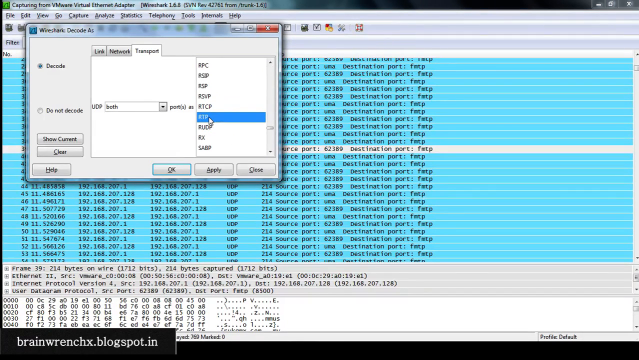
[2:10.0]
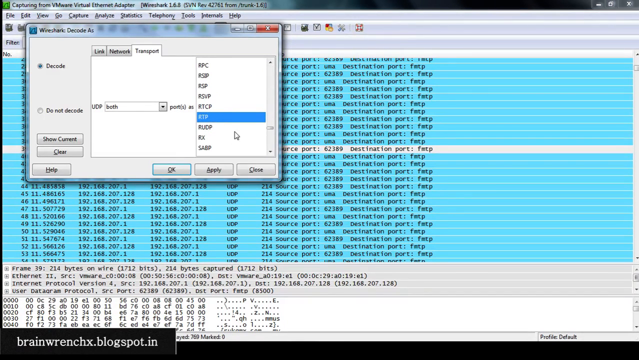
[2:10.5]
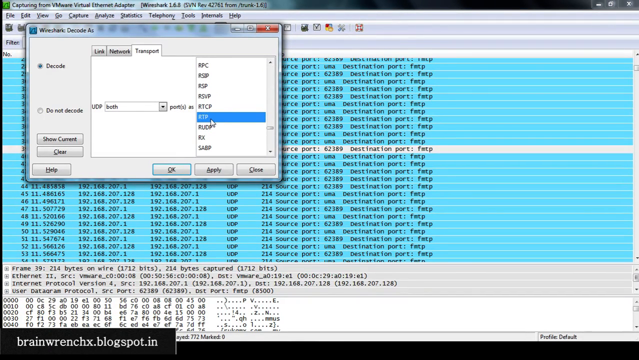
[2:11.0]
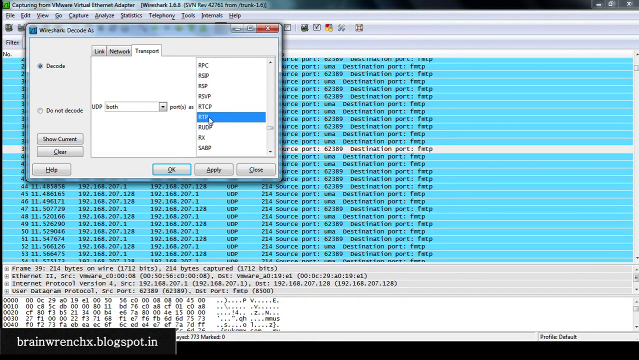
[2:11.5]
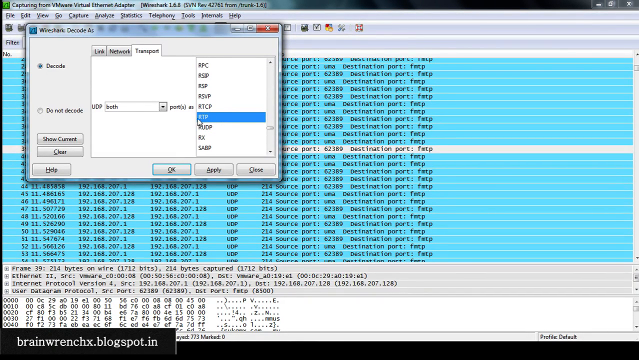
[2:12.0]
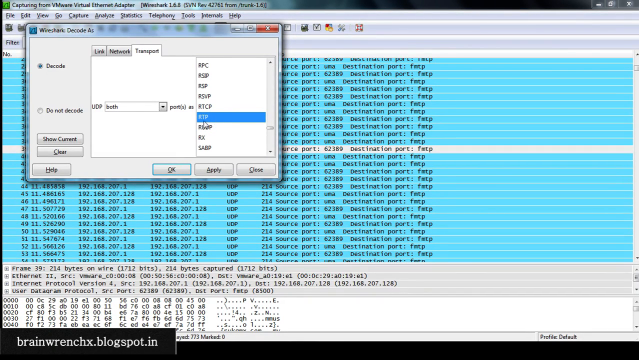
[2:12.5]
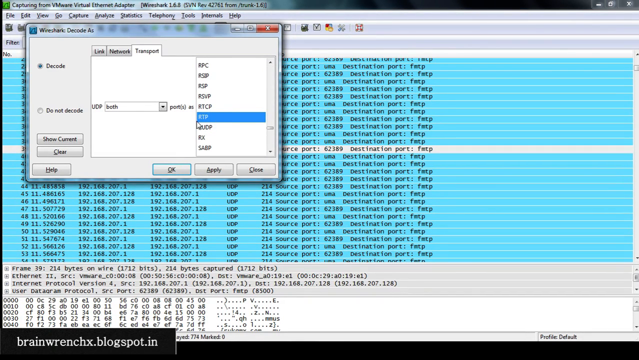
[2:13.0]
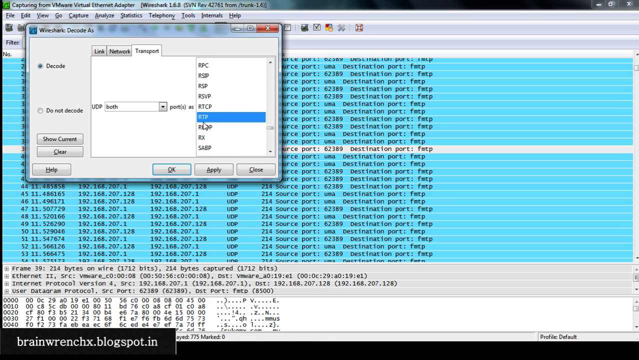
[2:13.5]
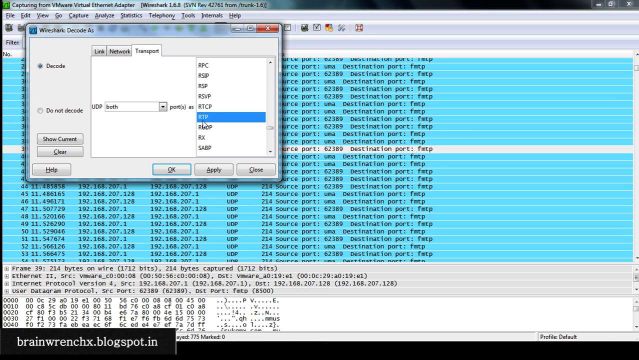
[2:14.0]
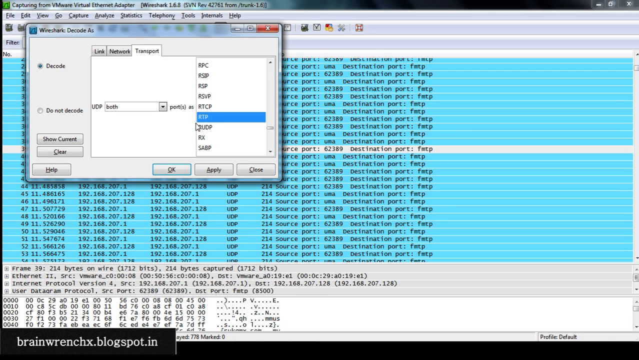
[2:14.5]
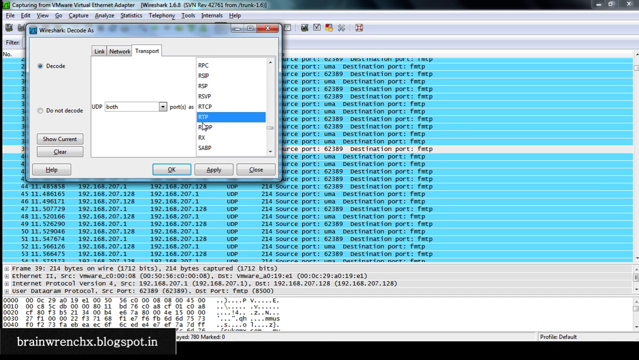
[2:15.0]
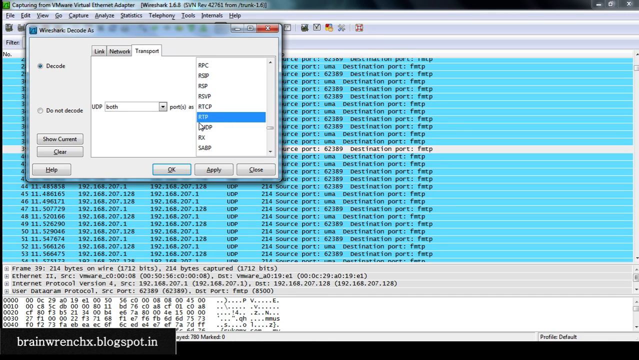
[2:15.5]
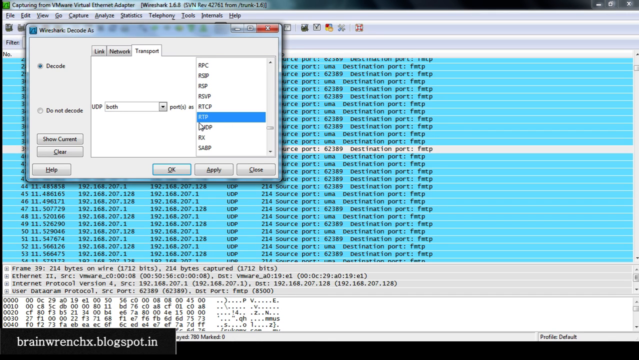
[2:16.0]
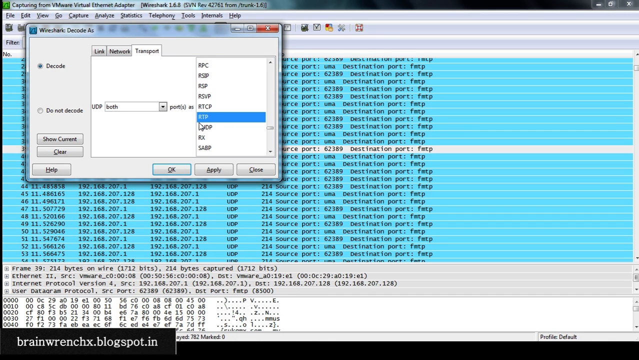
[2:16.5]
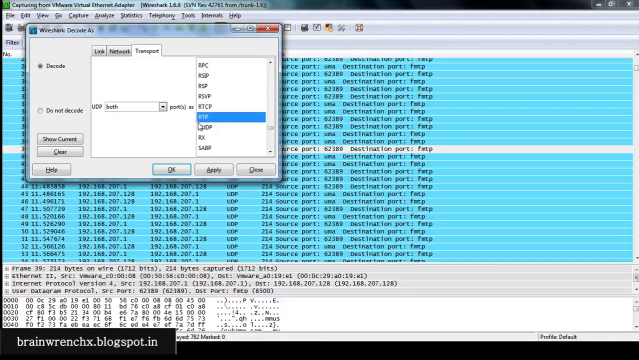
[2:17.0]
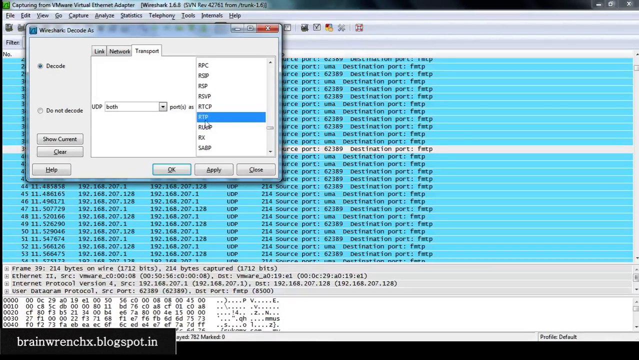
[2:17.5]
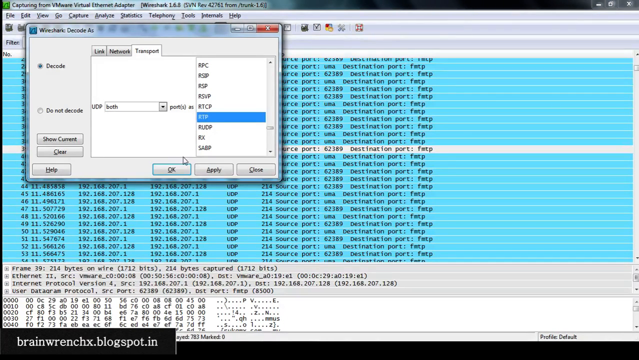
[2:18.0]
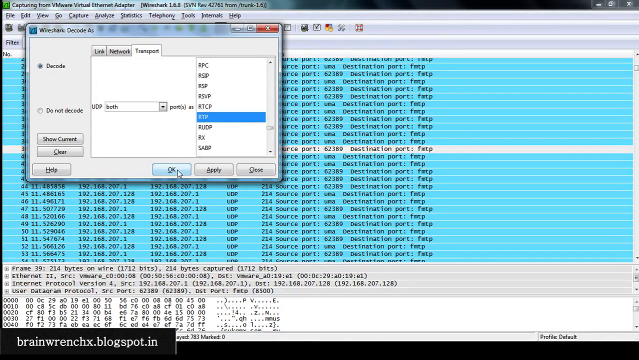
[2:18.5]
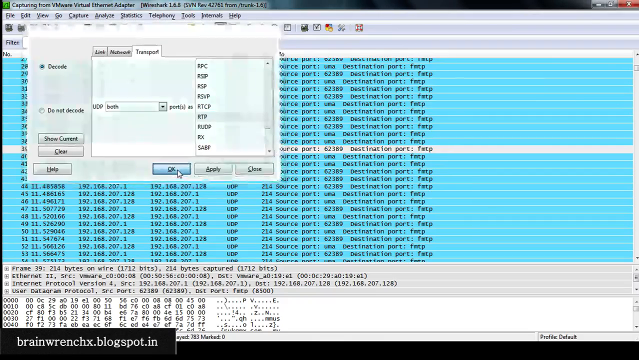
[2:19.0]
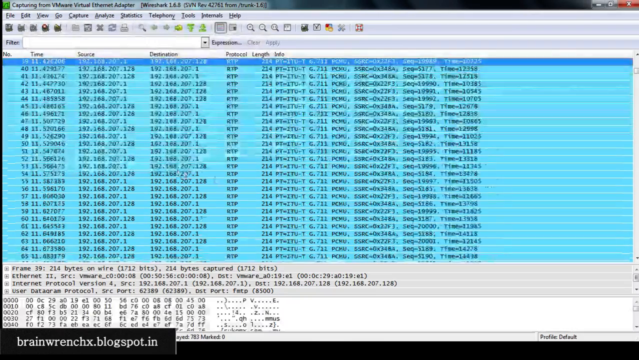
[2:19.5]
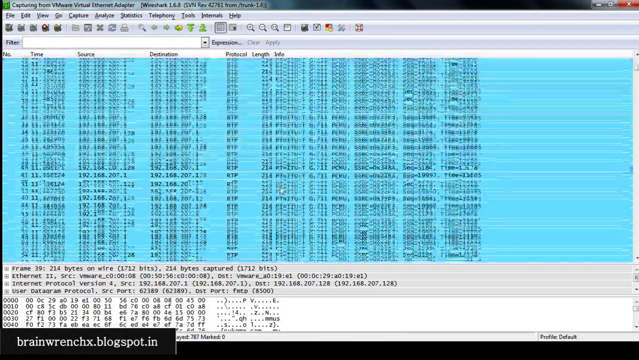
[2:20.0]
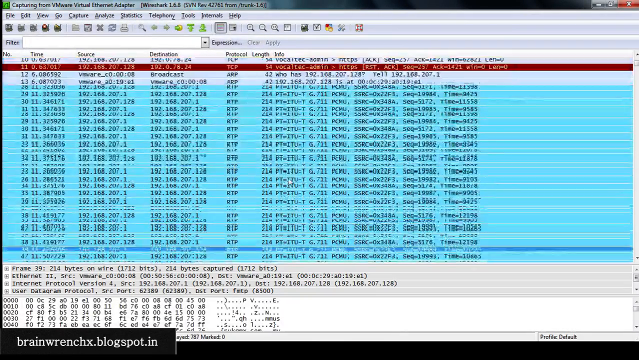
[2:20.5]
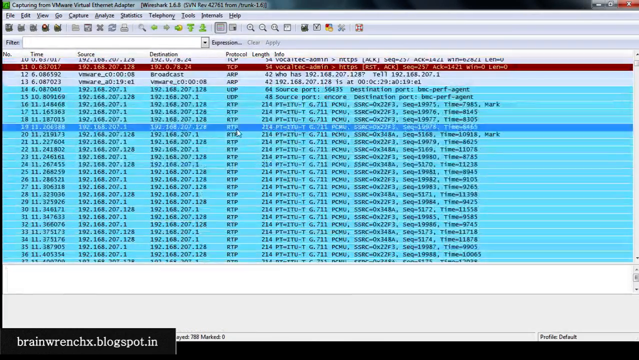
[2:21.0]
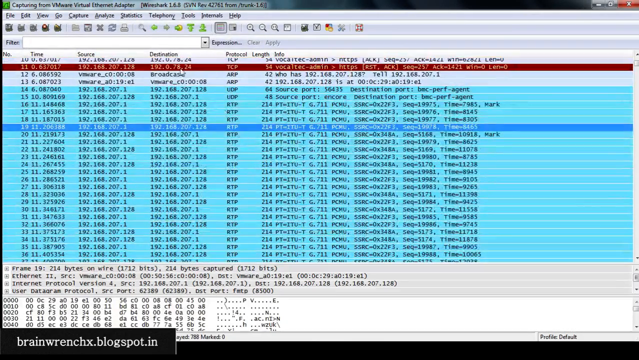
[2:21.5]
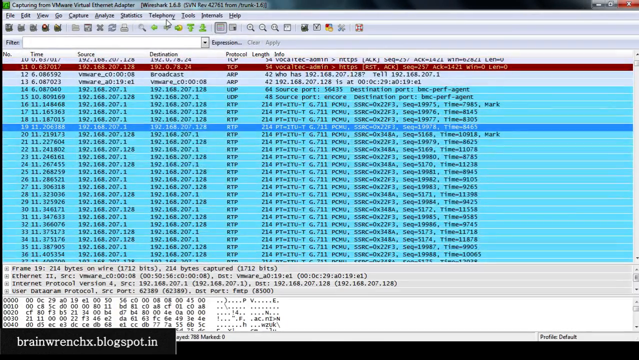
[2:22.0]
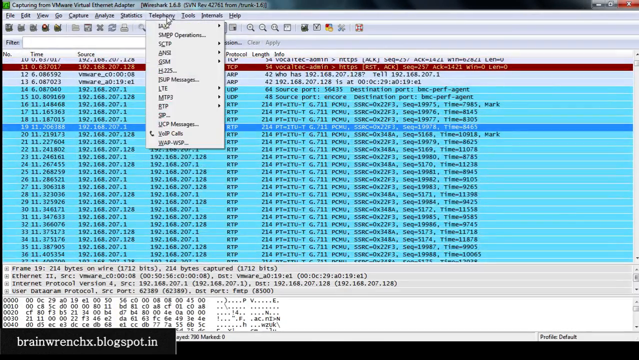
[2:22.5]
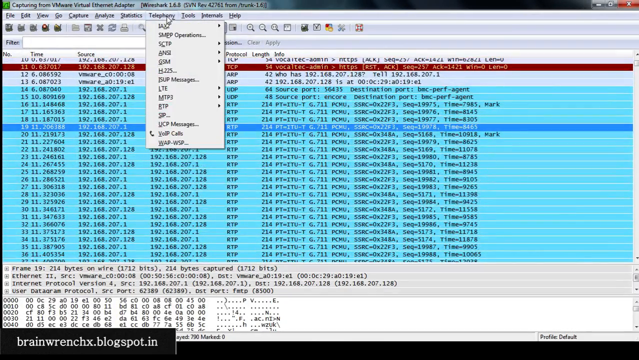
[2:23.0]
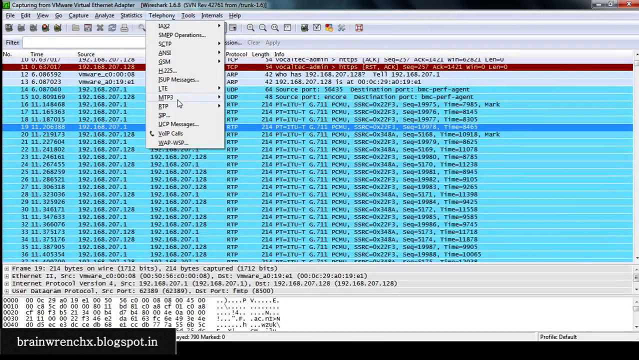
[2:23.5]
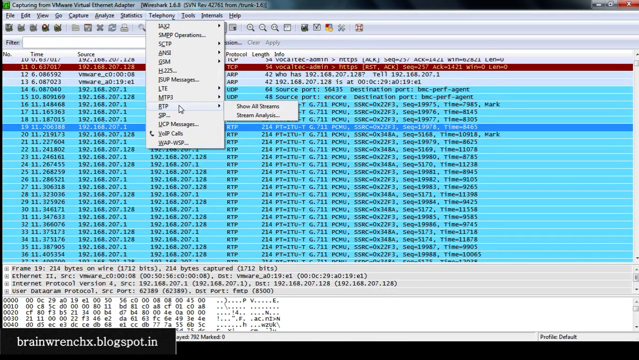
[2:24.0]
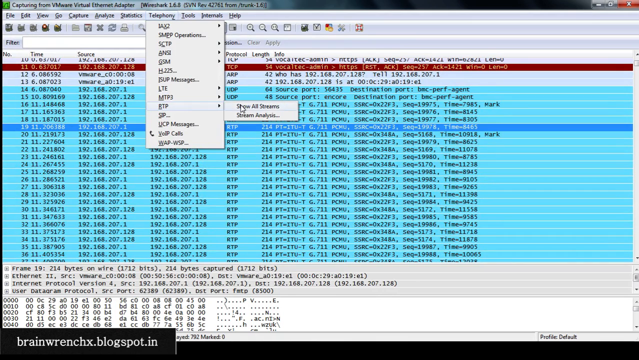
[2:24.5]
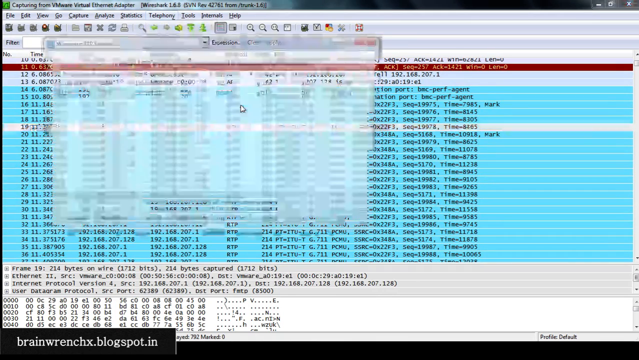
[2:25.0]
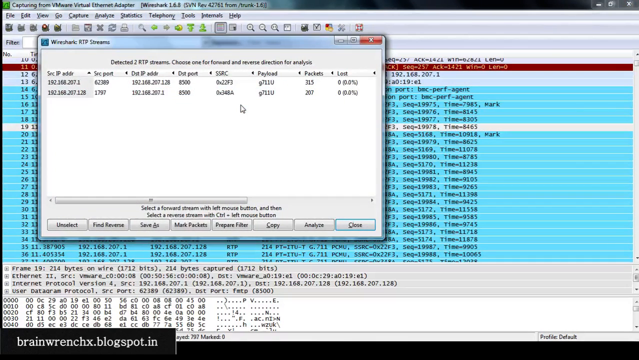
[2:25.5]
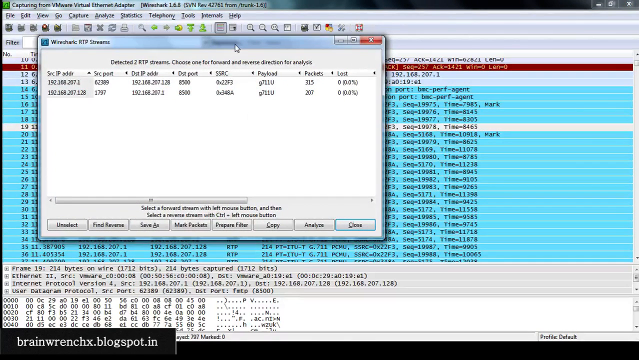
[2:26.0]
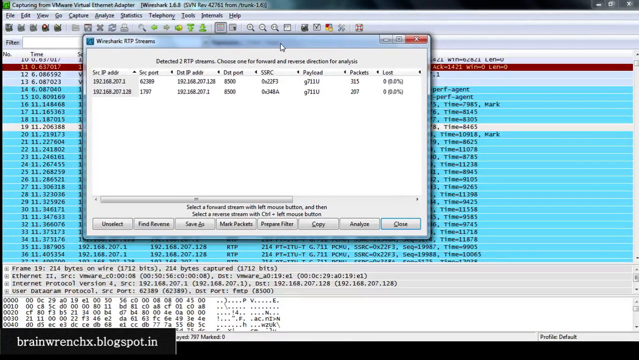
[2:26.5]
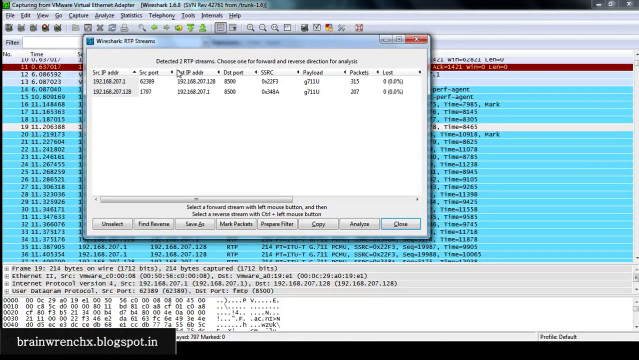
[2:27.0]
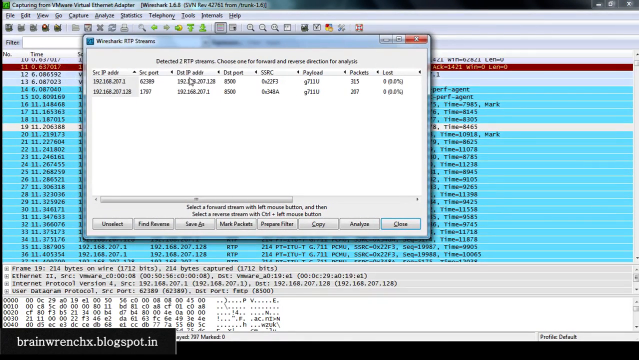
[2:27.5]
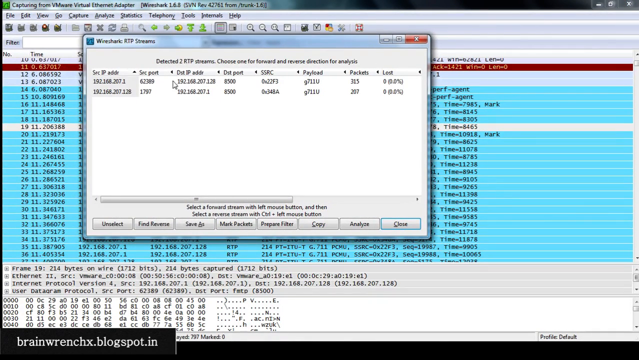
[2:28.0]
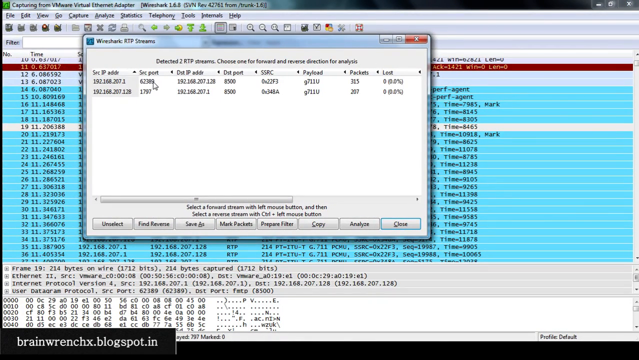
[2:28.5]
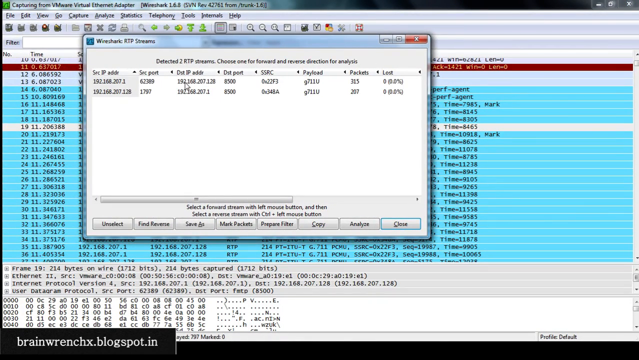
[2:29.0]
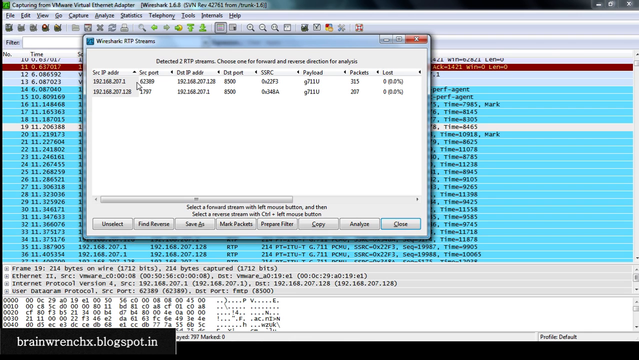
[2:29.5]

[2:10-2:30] The VoIP Caller Extreme application runs on Windows XP, and the video appears to have been recorded in high definition. The instructor seems to be showing how to manipulate VoIP information.